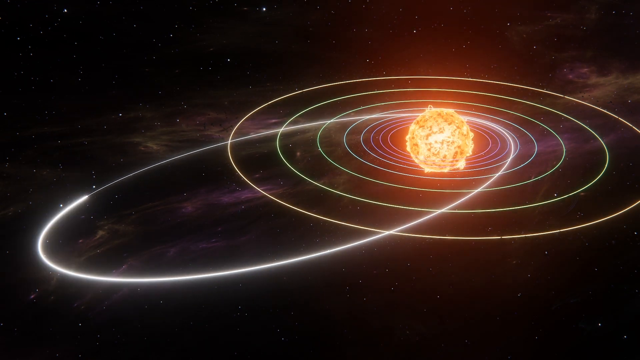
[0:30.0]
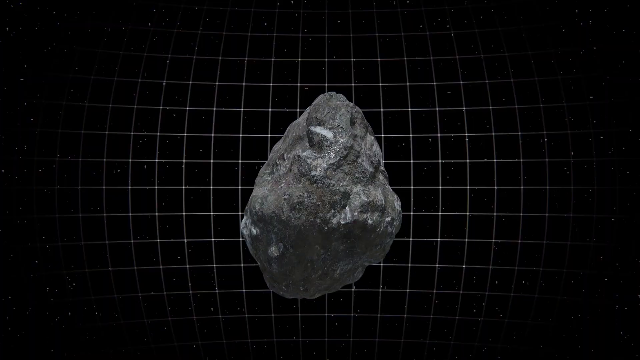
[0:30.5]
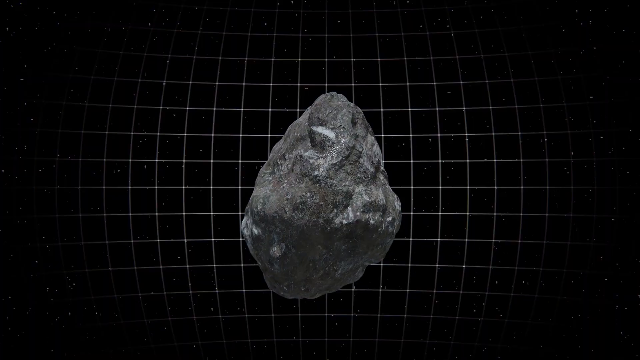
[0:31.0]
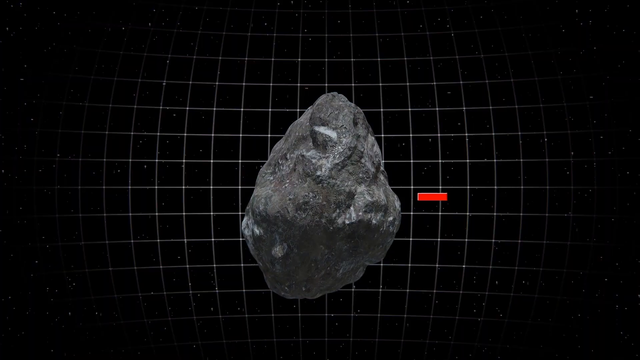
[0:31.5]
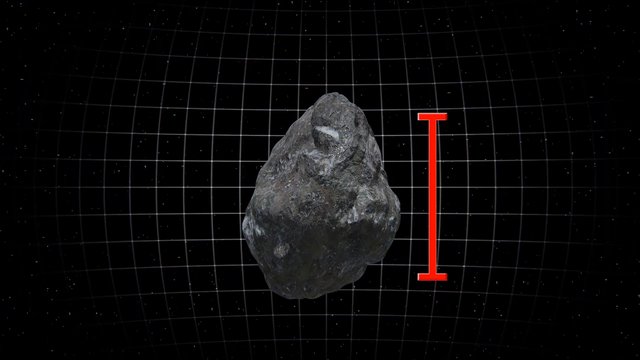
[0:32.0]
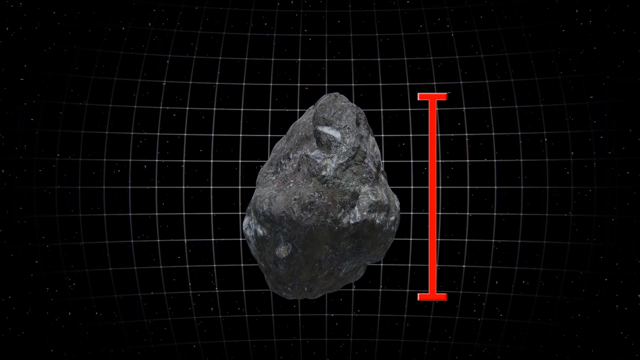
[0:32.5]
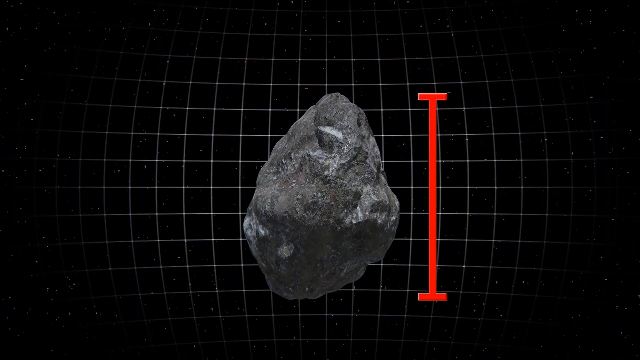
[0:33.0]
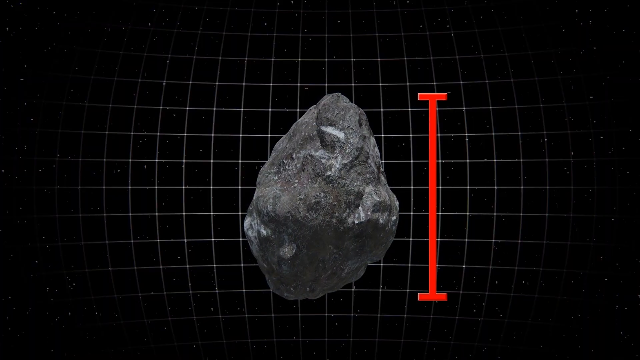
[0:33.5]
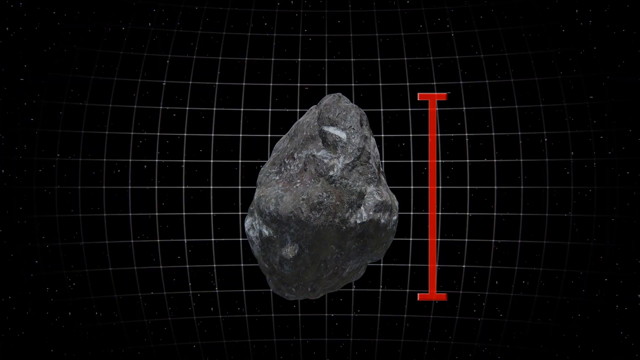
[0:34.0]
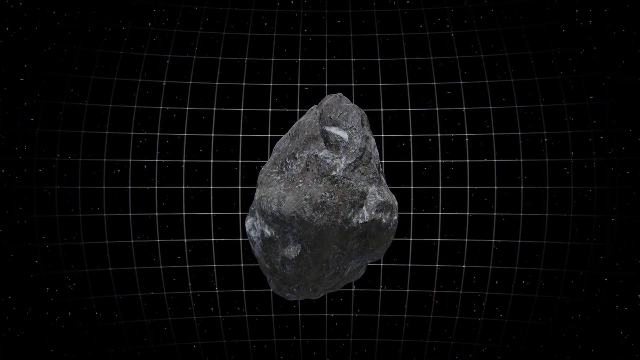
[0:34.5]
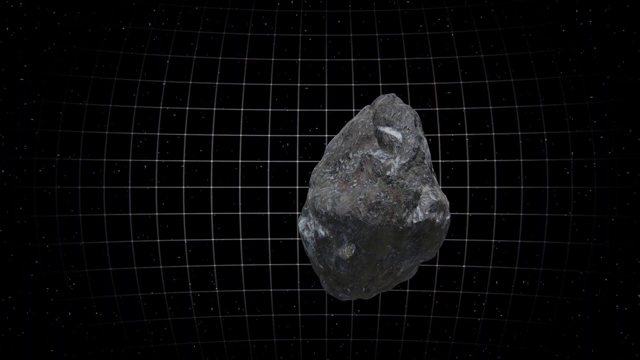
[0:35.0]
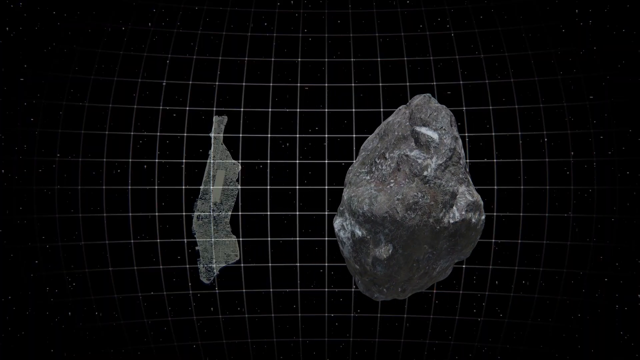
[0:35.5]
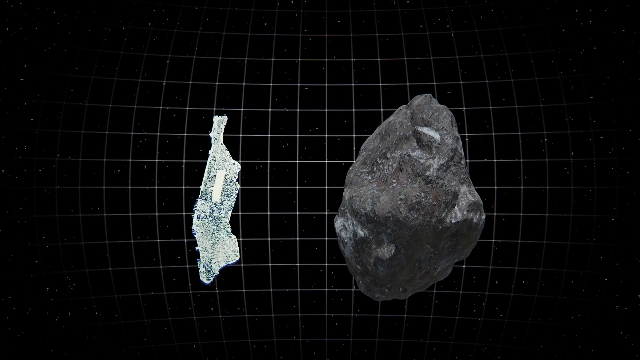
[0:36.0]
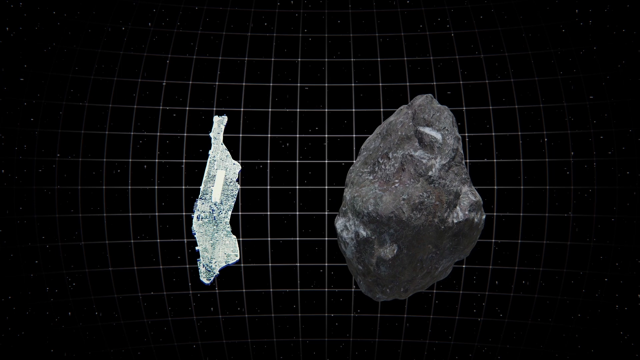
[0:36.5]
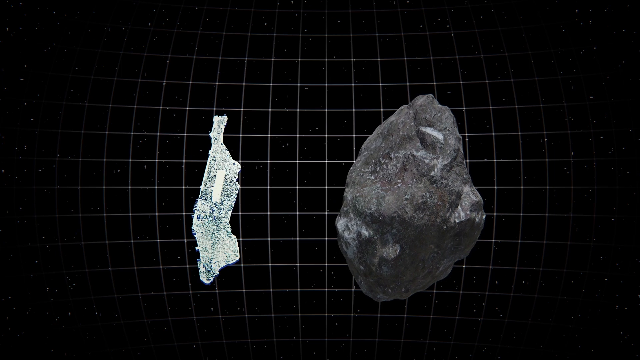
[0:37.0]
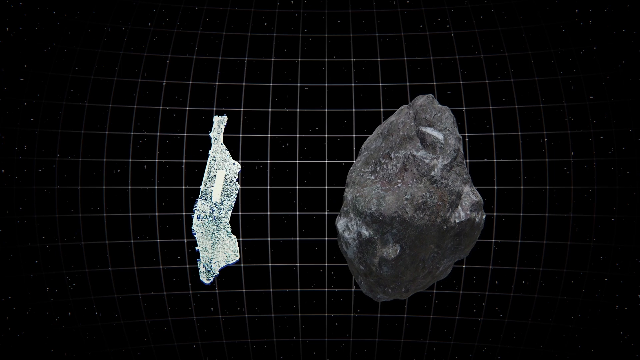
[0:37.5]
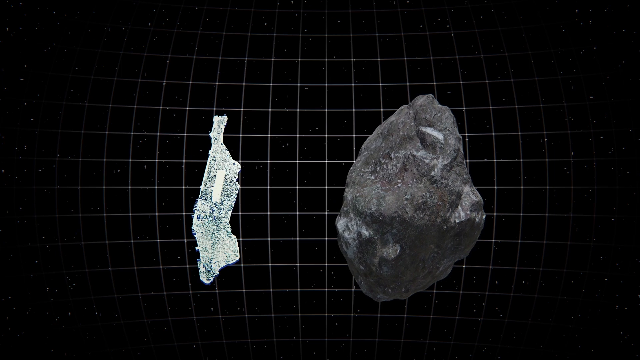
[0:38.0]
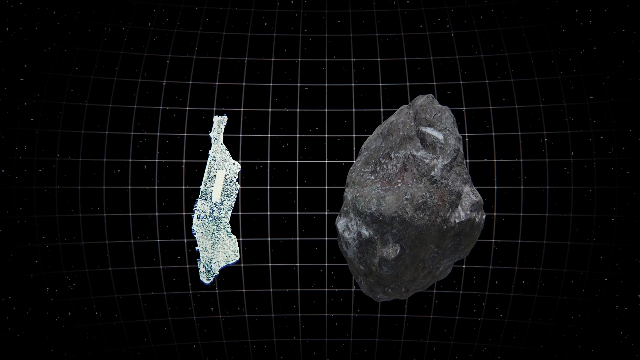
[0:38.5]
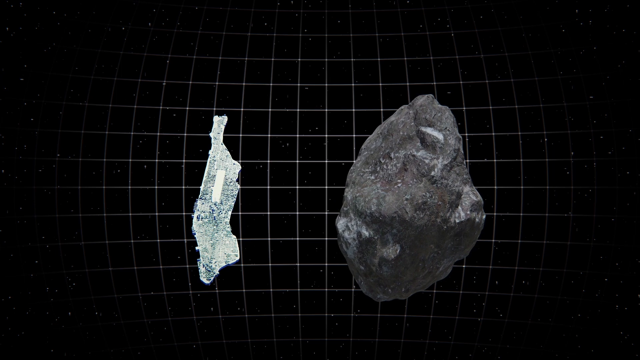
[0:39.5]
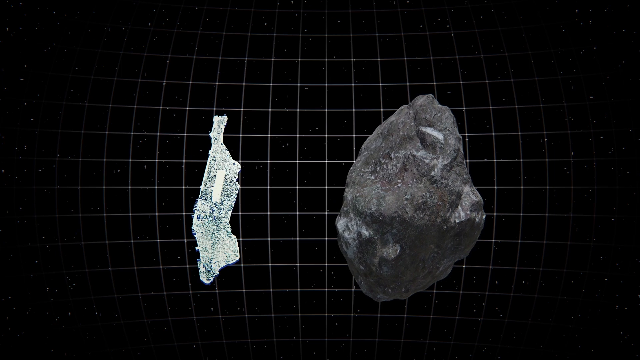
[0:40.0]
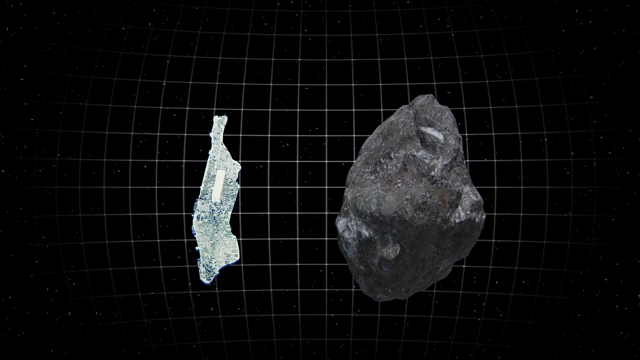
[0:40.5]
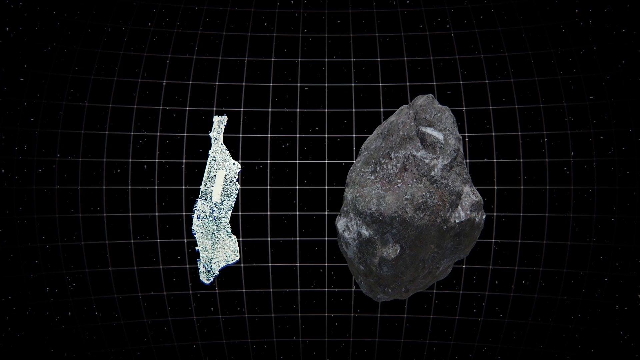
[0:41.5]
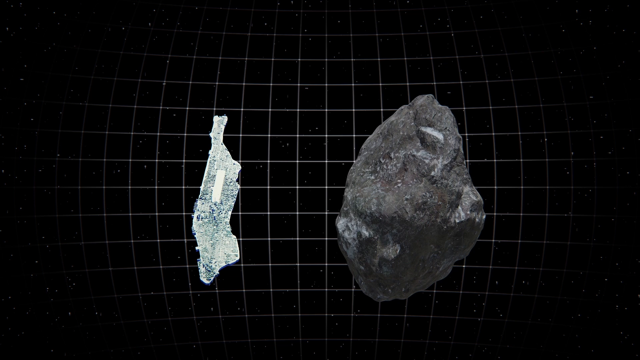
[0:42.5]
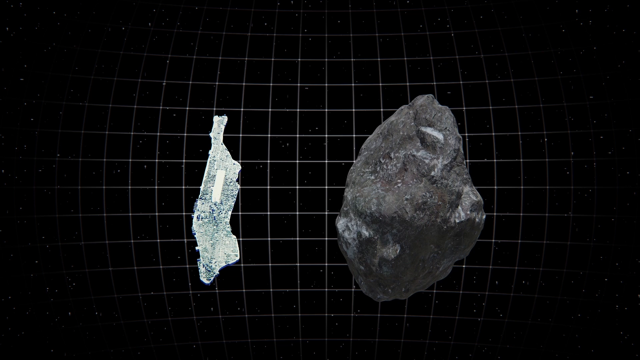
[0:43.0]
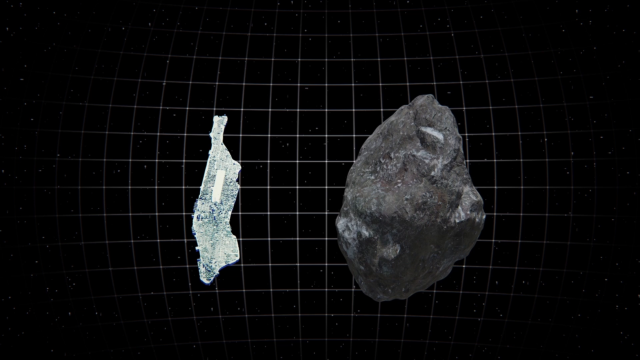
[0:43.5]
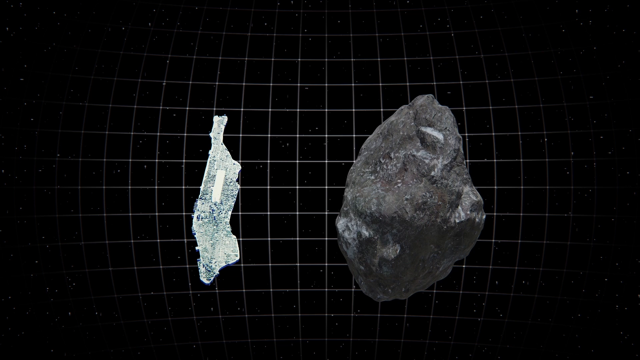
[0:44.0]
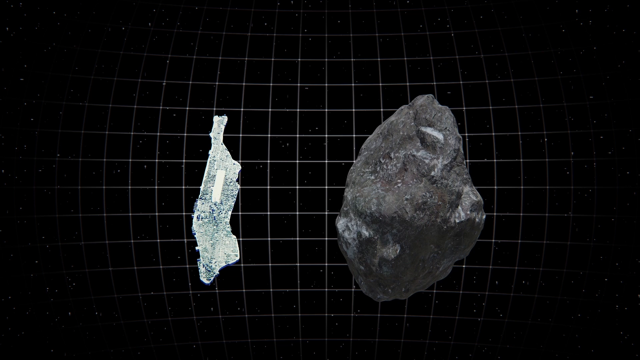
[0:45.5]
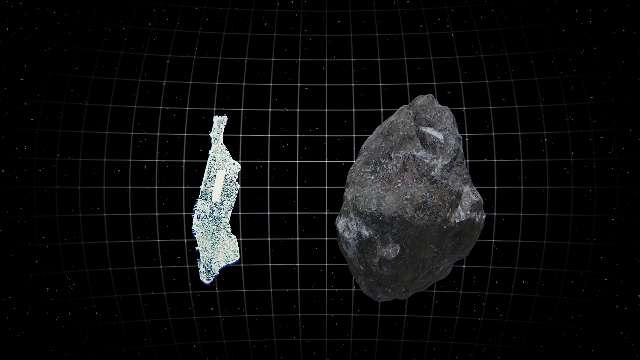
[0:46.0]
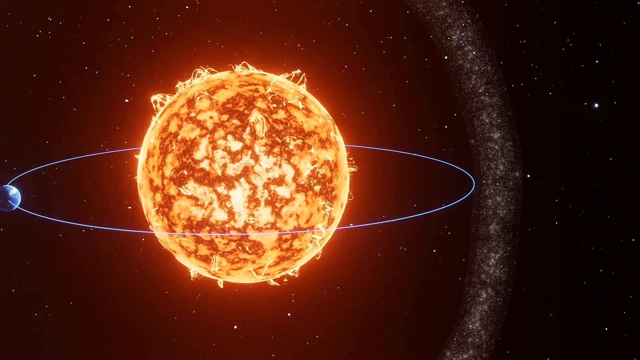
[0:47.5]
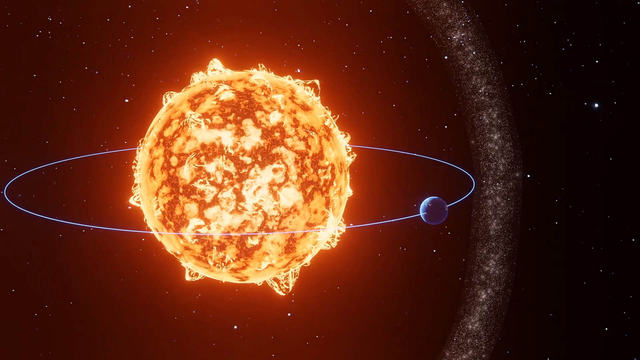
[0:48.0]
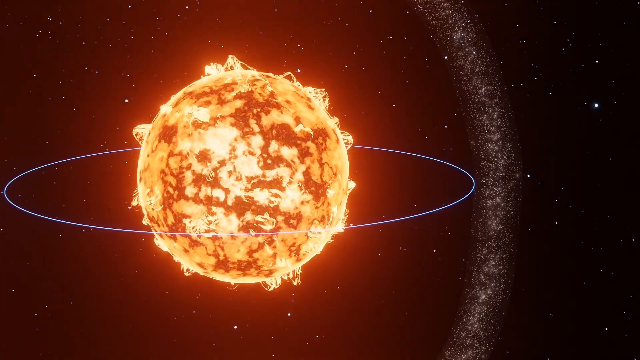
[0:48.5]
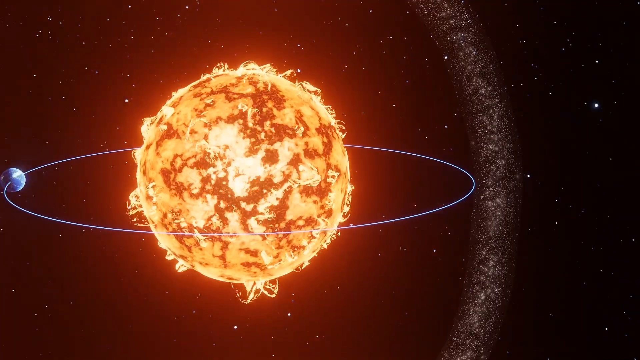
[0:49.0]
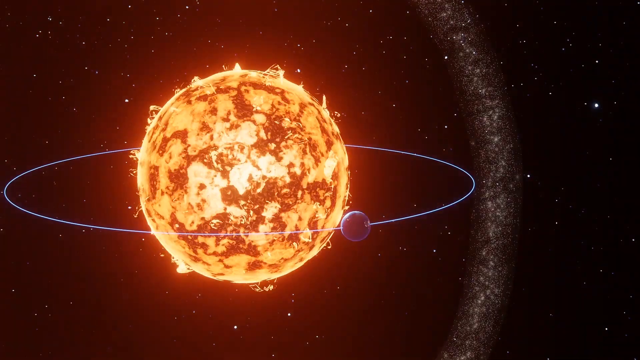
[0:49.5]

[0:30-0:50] The orbit of what is probably a comet is shown. Then two rocks appear in a square: one looks like an asteroid, and the other looks more icy, possibly a comet, with a long shape. After the orbit is shown once, the view goes to the size of one rock, which looks like a rock. A little piece is put up next to it that is elongated and skinny and looks more translucent, kind of like ice. The orbit of just the Earth around the Sun is then shown, with no other planets, and then the view goes back to the original orbit of the rock or comet. No words are visible.